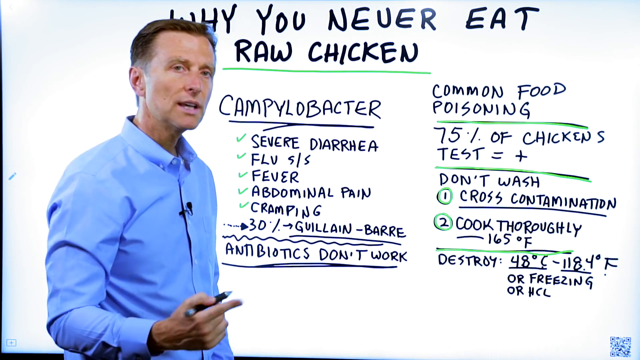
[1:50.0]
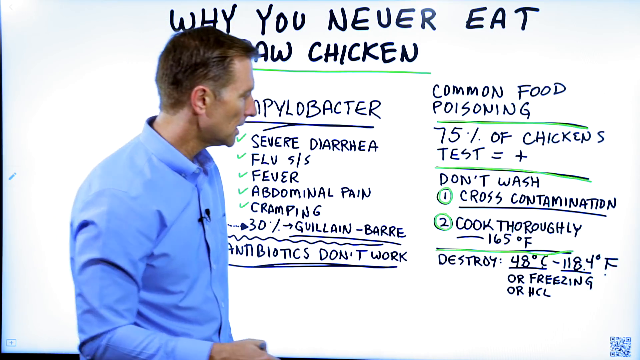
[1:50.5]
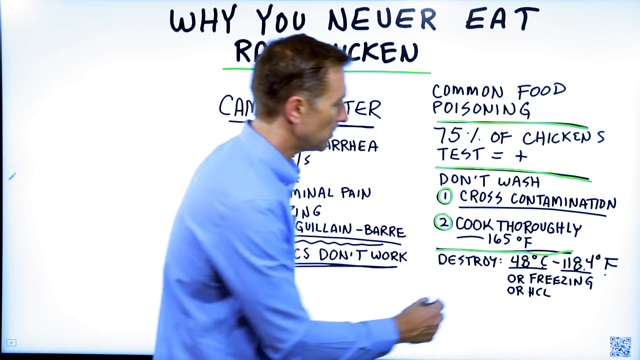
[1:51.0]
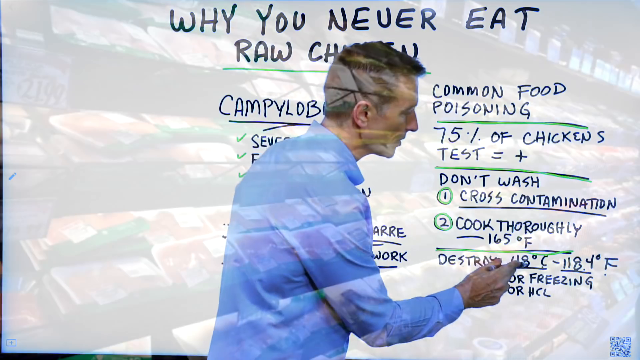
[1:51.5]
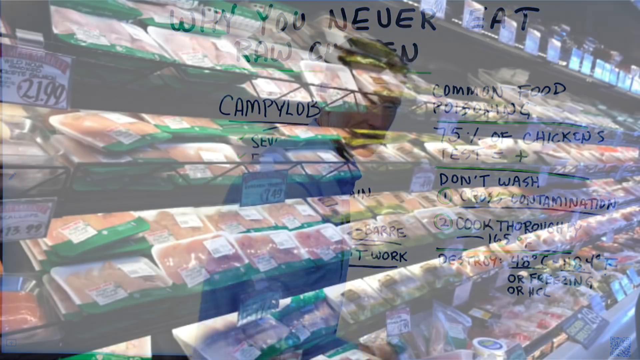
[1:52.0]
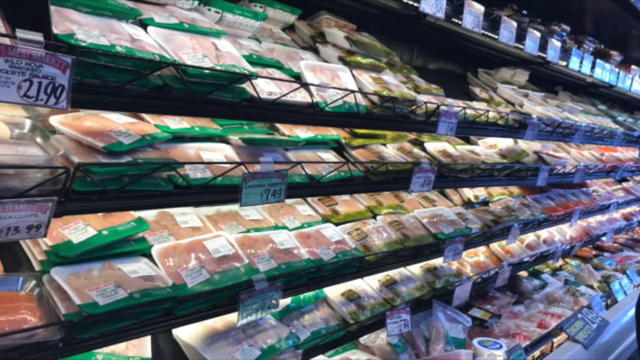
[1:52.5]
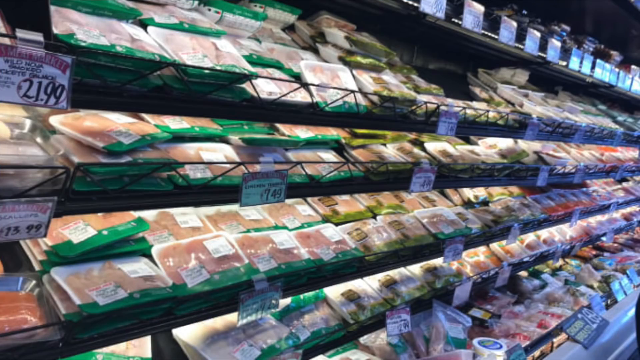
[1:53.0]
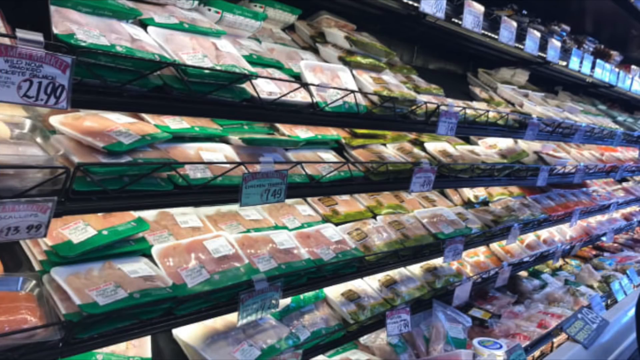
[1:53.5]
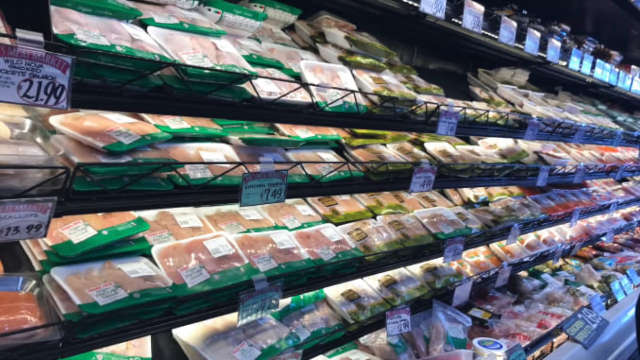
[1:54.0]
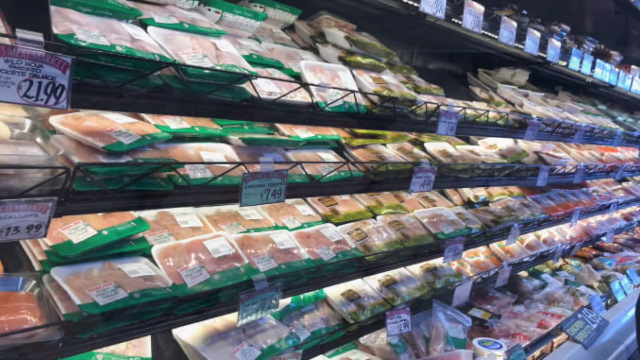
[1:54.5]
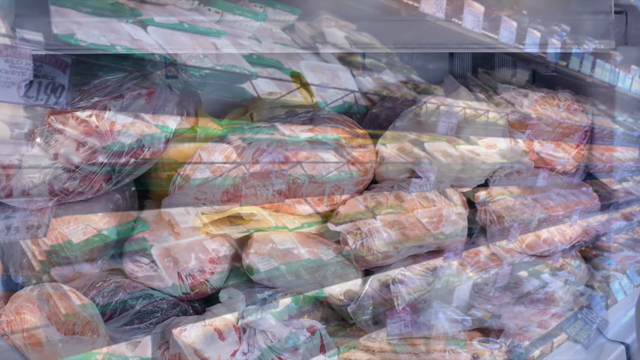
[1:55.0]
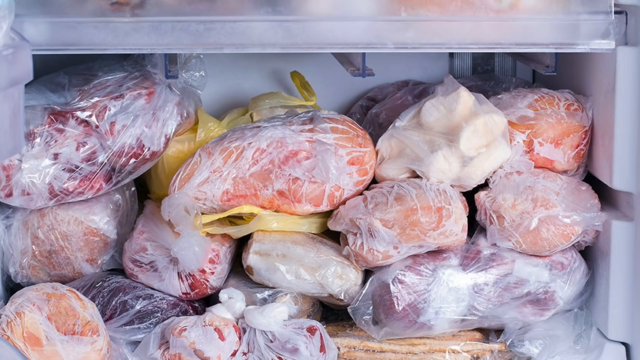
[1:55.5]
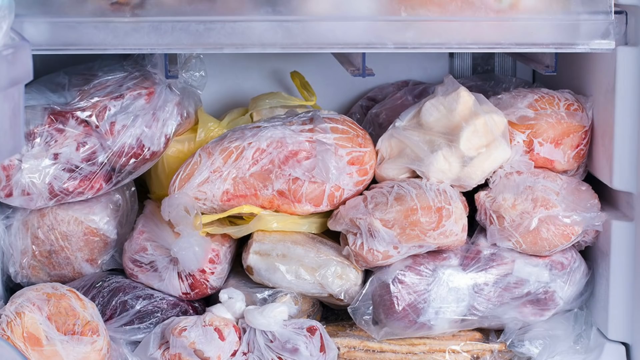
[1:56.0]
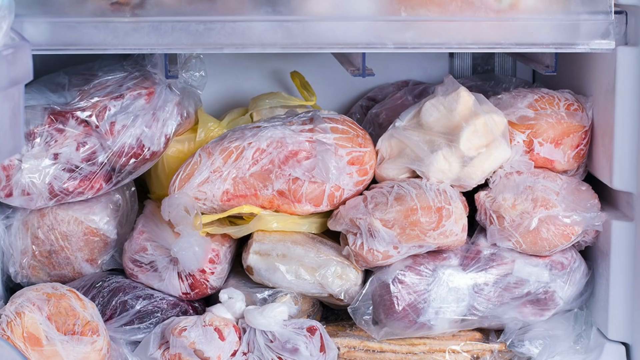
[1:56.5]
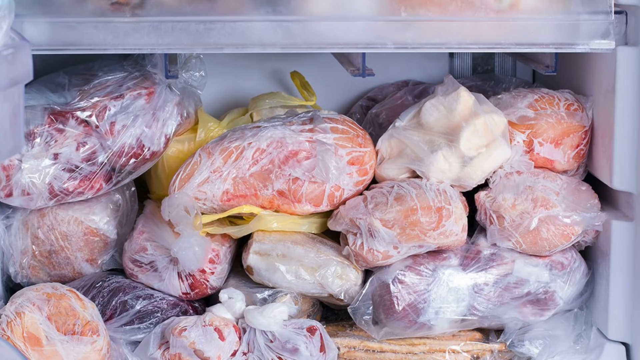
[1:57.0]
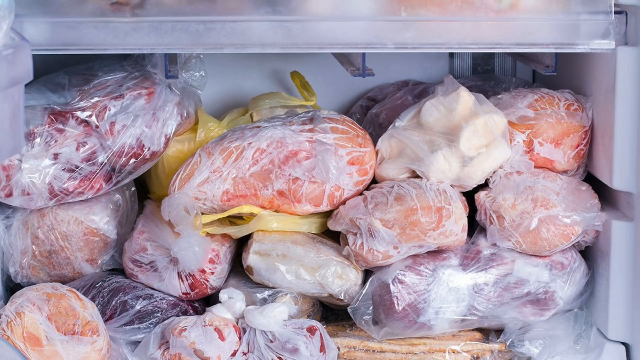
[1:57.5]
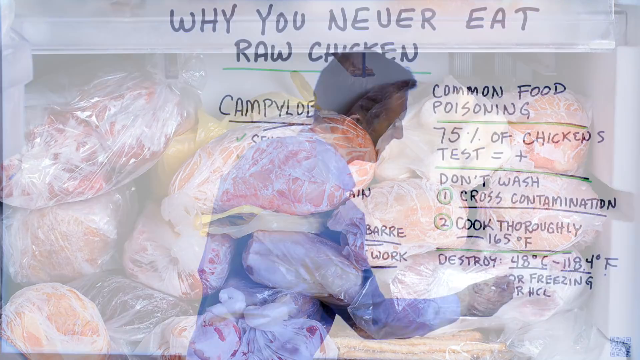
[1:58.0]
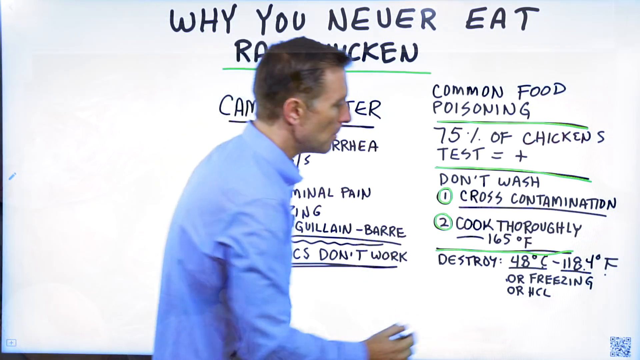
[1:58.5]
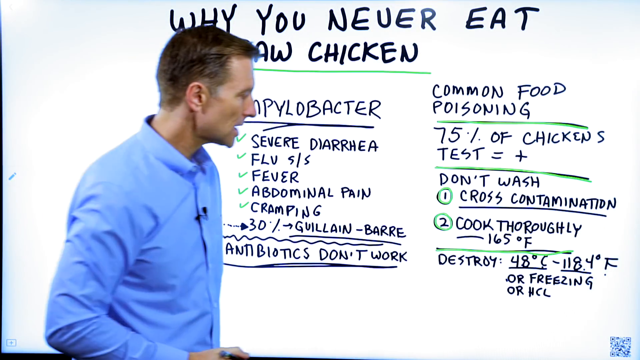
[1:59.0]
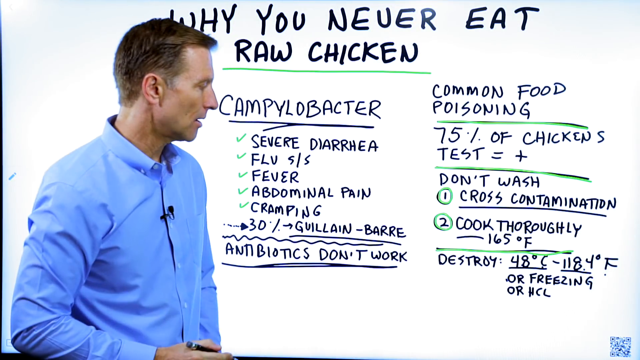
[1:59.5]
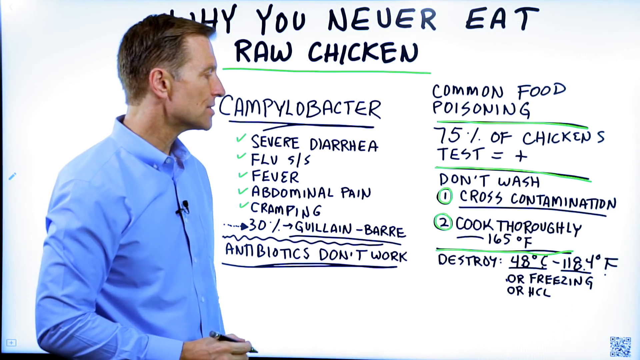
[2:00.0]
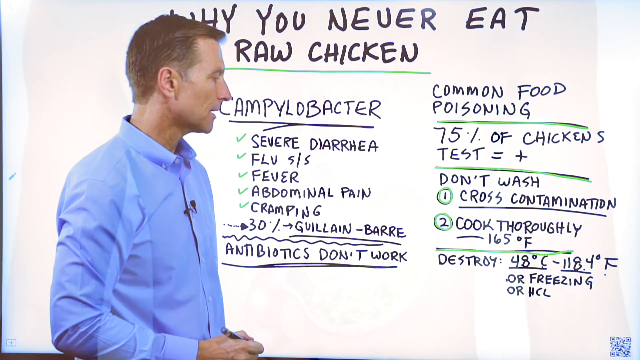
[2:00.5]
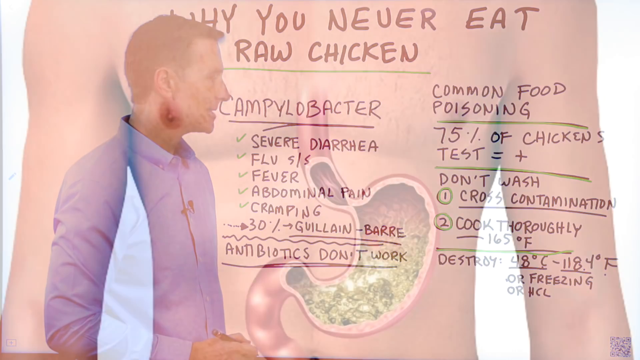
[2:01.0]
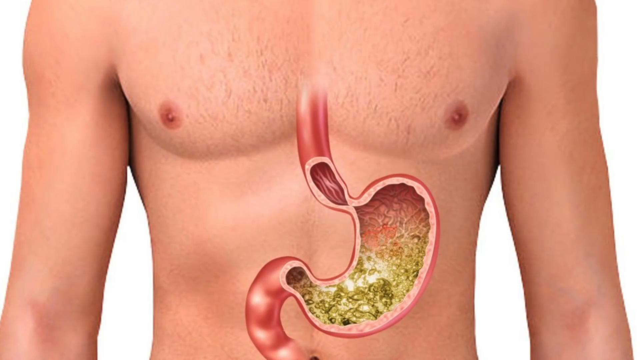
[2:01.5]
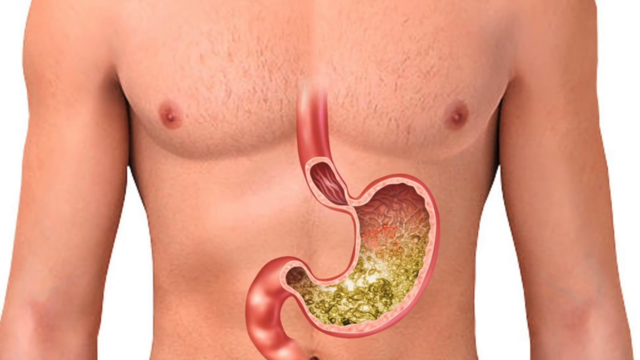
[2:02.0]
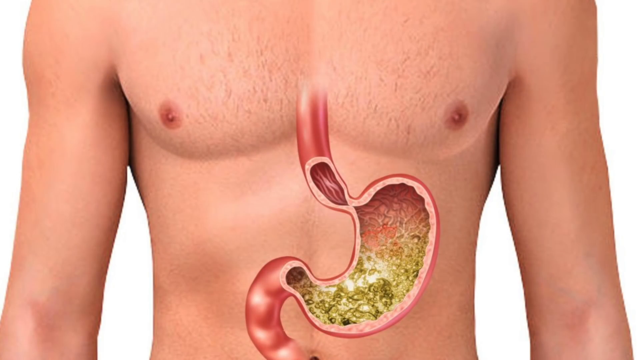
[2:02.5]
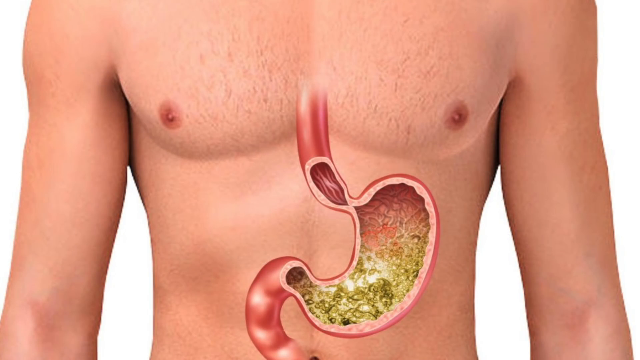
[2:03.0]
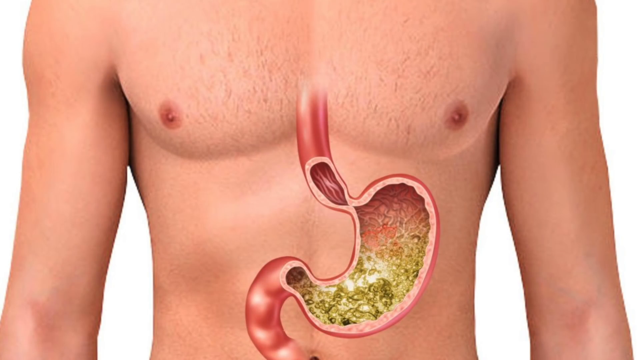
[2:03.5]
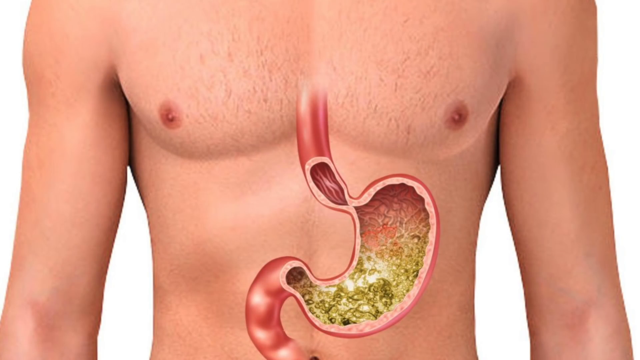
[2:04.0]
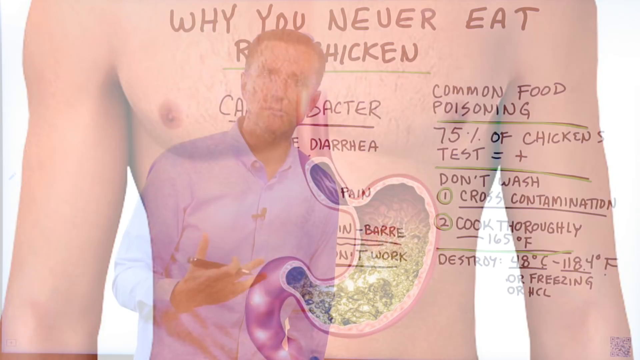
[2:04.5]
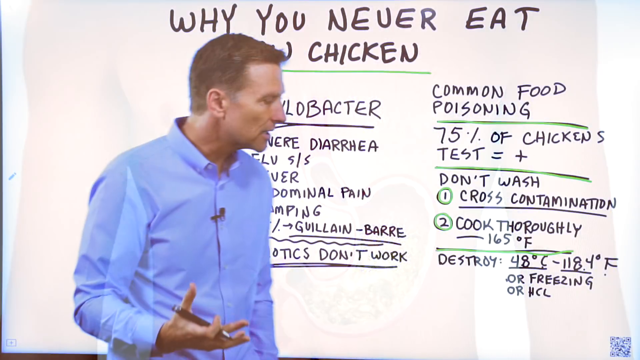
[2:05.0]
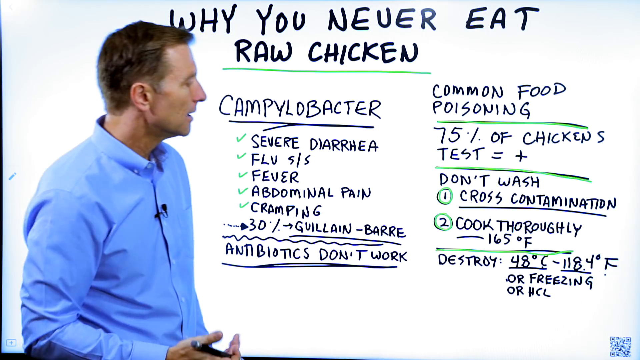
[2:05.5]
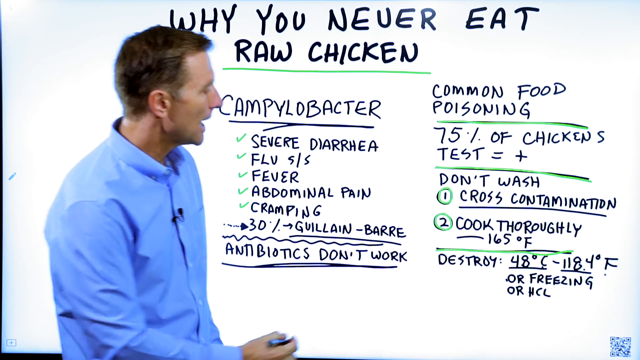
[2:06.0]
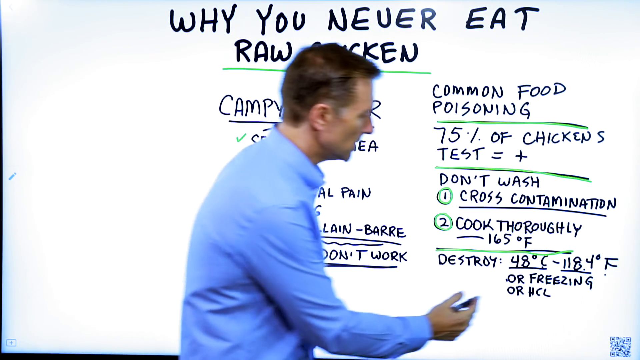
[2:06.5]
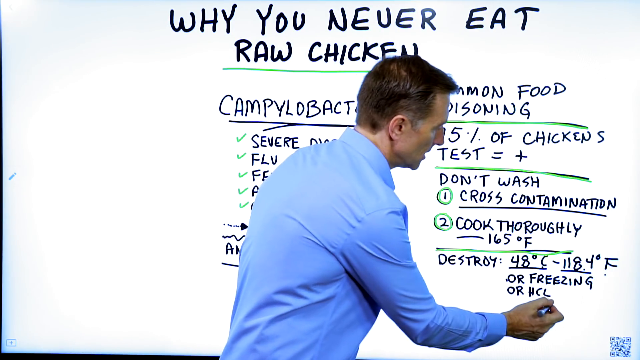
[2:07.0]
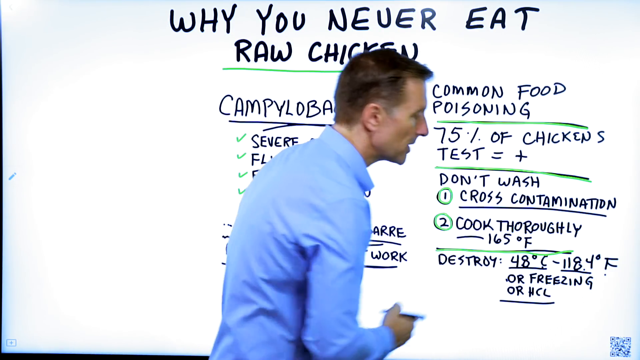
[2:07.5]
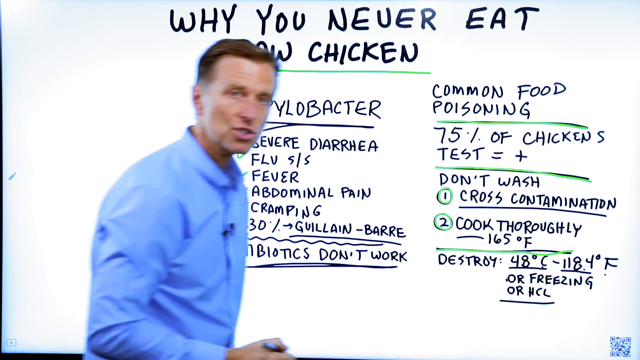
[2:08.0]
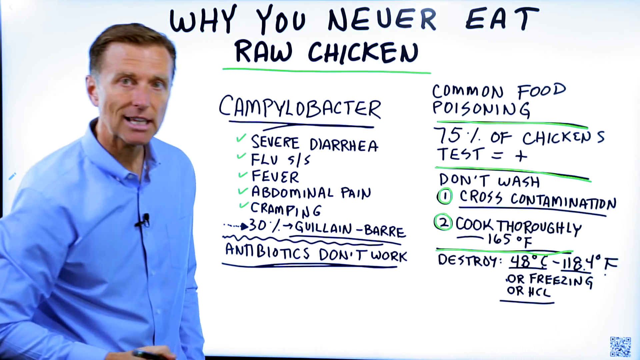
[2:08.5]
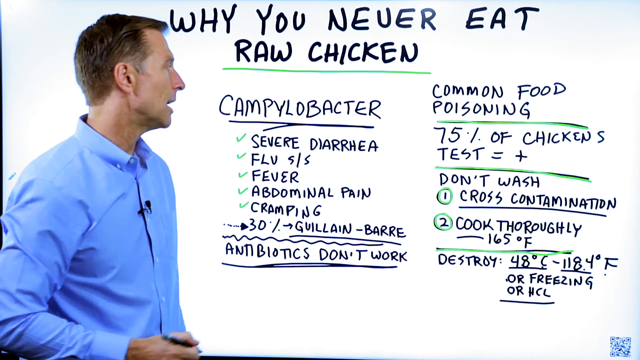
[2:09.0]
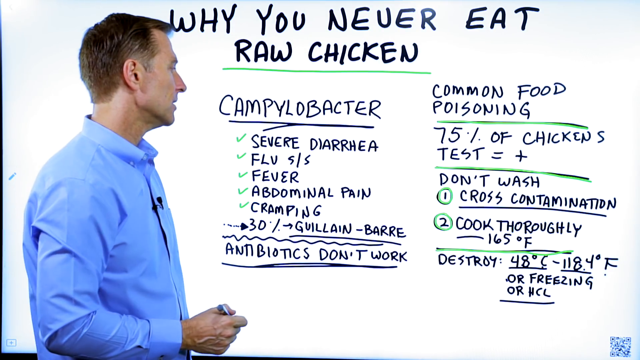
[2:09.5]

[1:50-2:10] The teacher is shown teaching. A picture then shows packed meat in a store: the meat is on white plates, wrapped in colorless plastic, with some green color as well. Two white papers are pasted on the meat, apparently showing the prices. Another picture shows a bar fridge containing packages of red meat and white meat, wrapped in colorless plastic. The teacher is shown again, teaching, and then a picture of a man focusing on his stomach is shown.